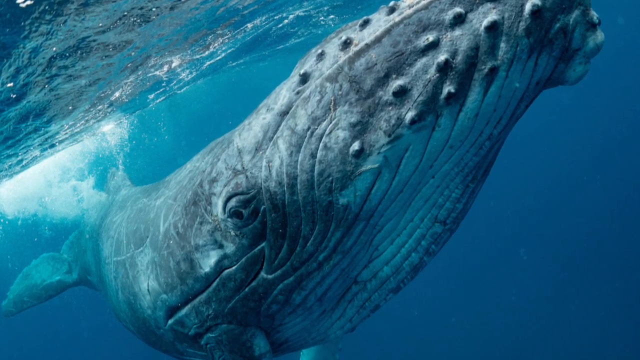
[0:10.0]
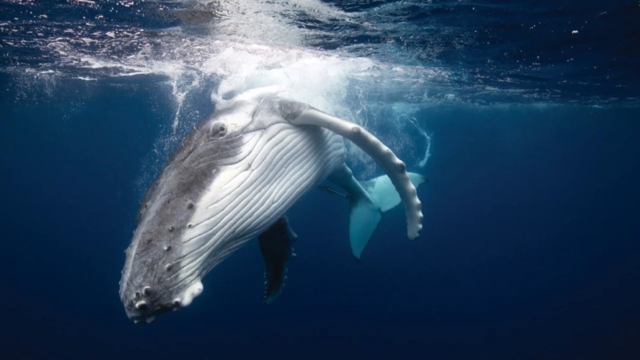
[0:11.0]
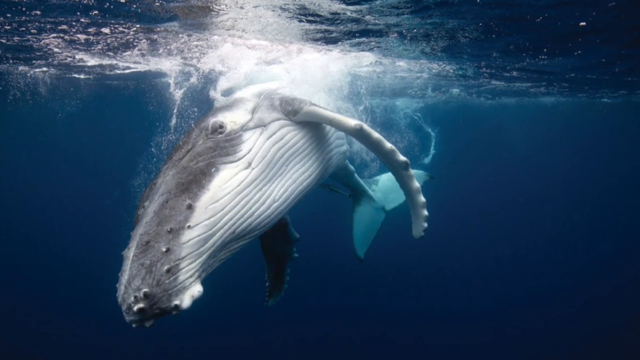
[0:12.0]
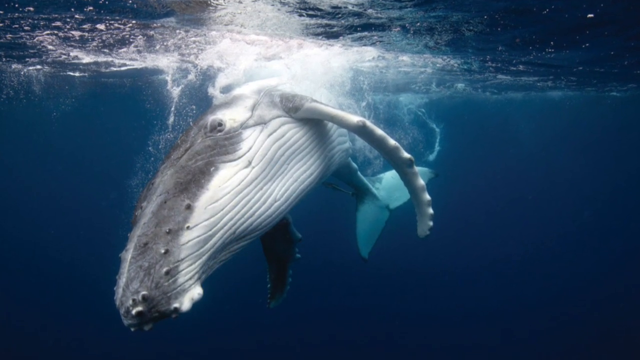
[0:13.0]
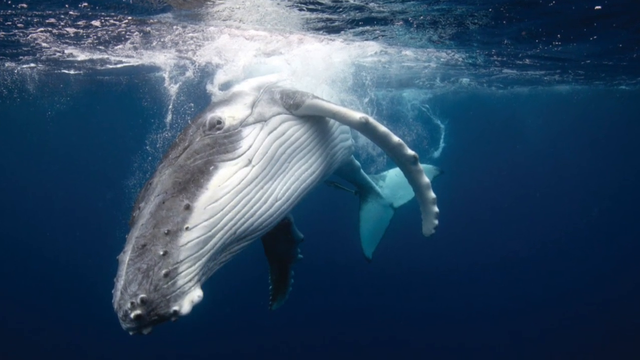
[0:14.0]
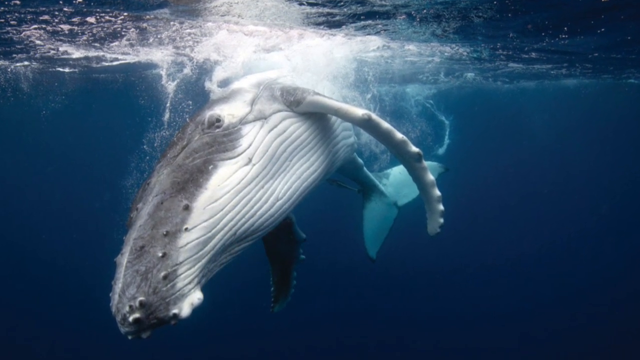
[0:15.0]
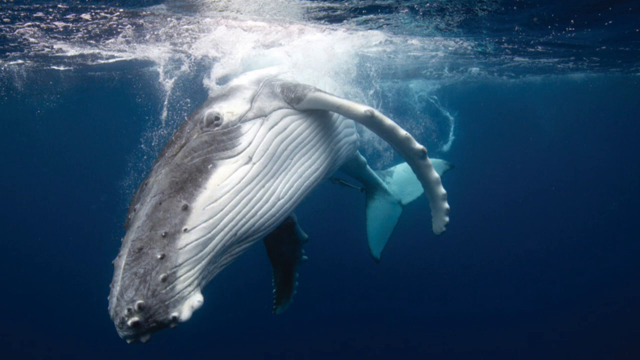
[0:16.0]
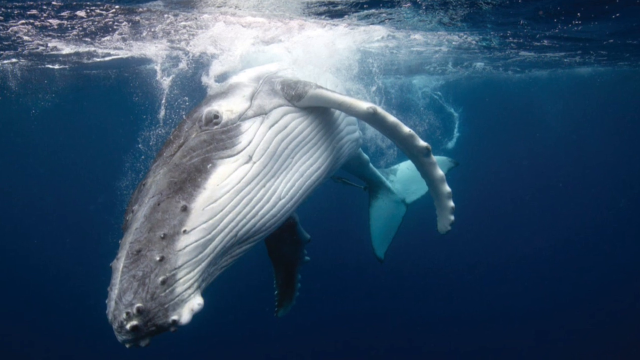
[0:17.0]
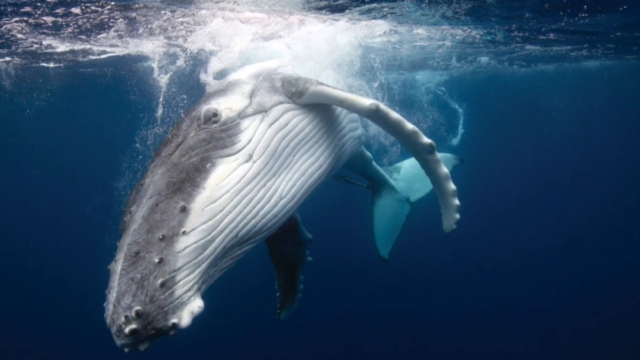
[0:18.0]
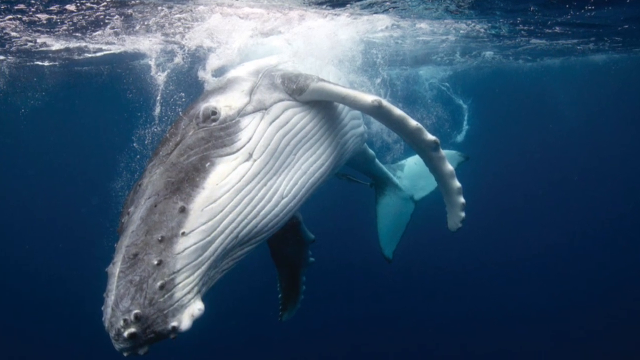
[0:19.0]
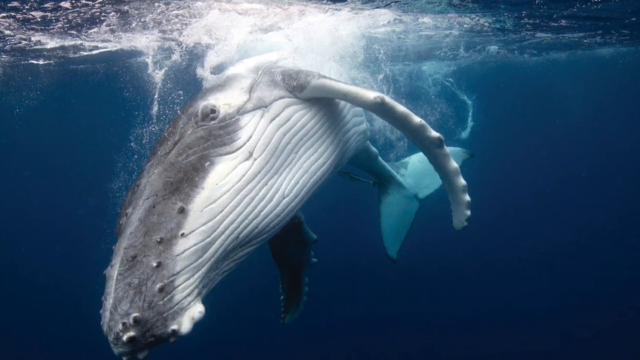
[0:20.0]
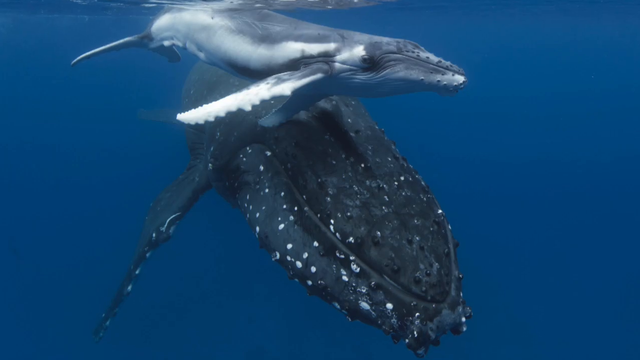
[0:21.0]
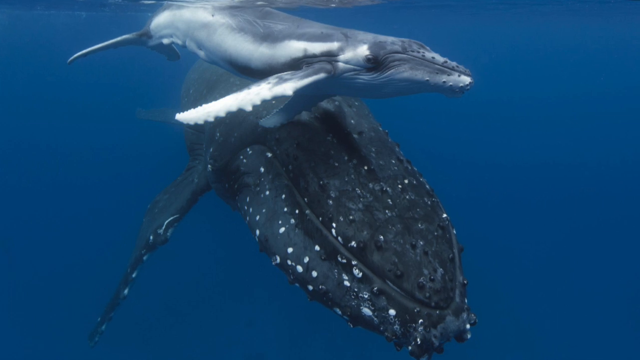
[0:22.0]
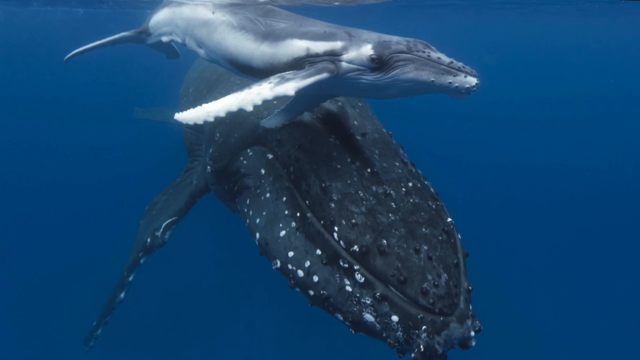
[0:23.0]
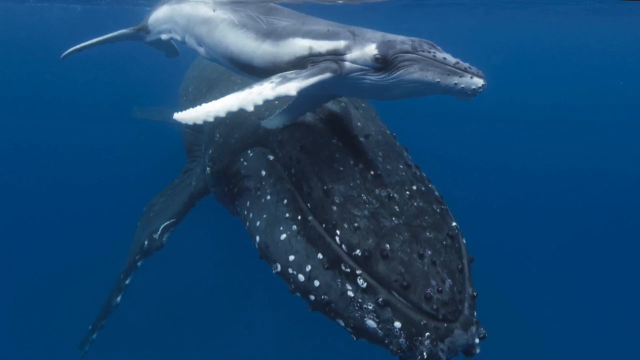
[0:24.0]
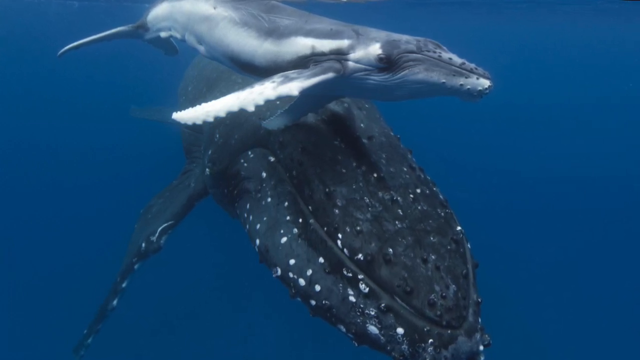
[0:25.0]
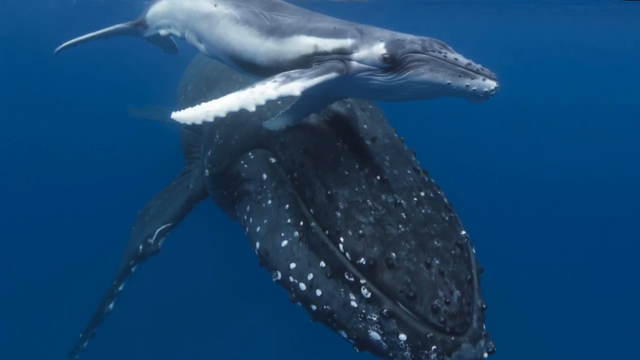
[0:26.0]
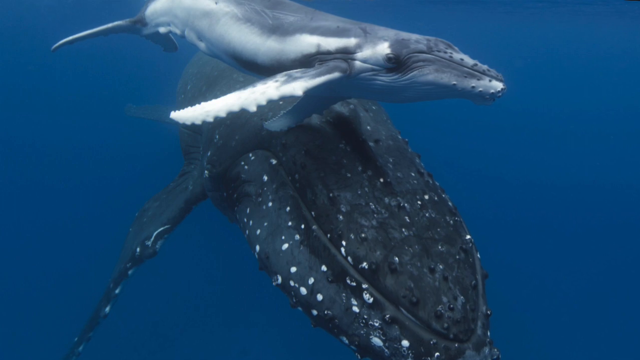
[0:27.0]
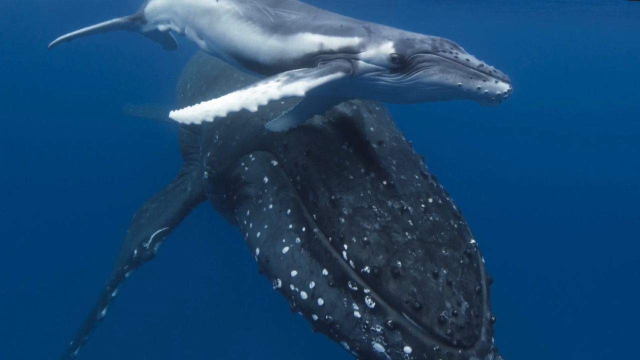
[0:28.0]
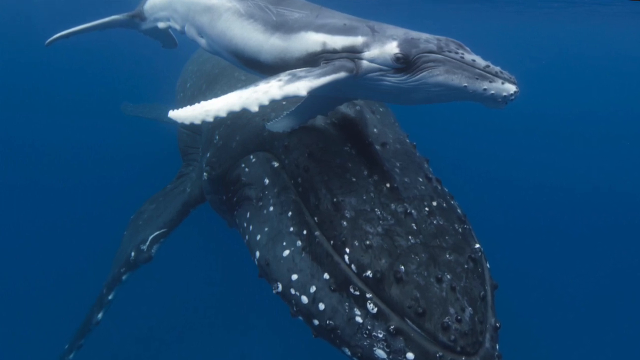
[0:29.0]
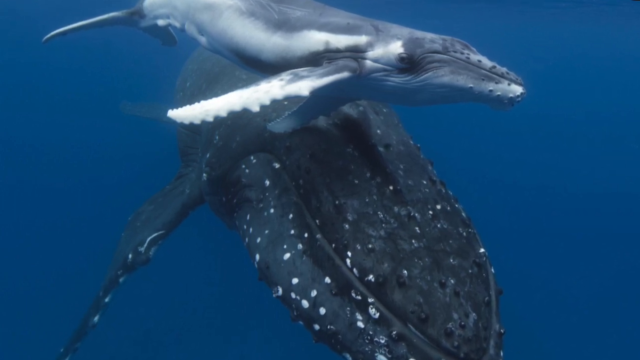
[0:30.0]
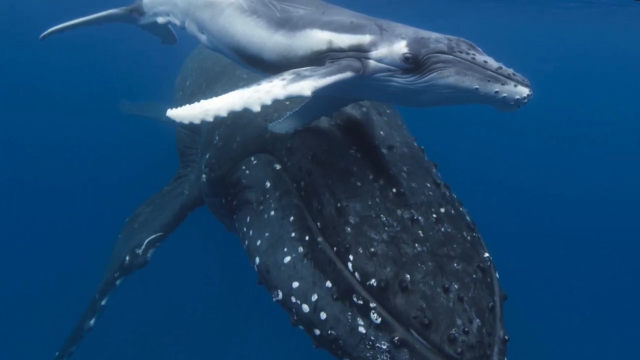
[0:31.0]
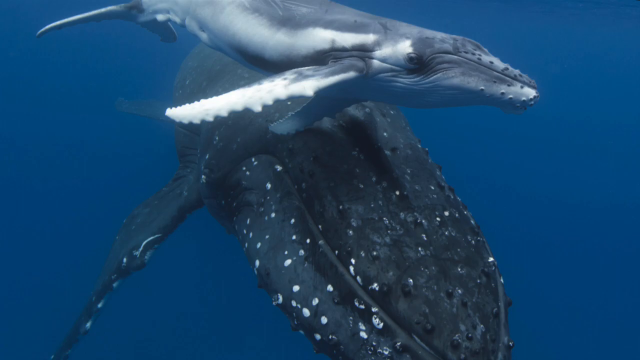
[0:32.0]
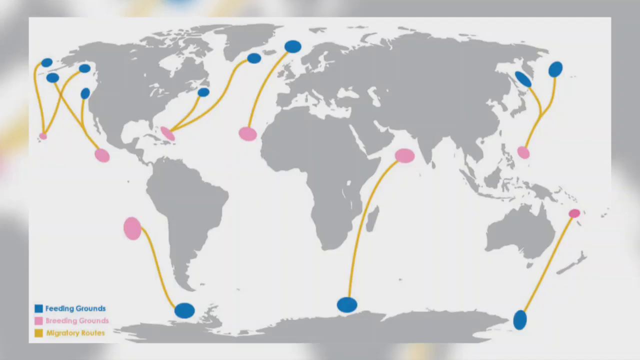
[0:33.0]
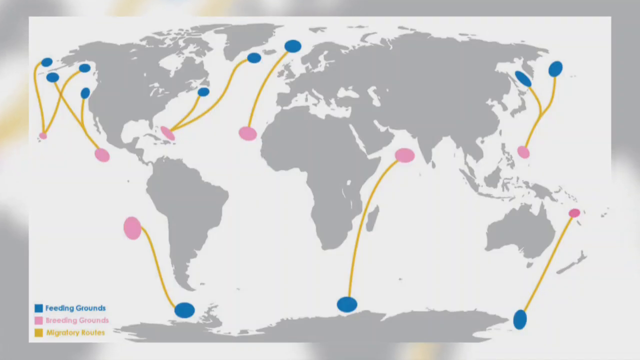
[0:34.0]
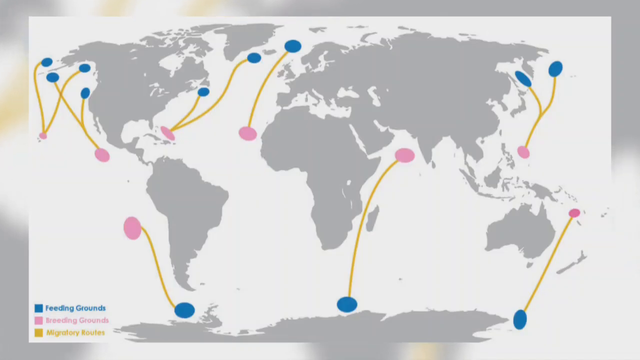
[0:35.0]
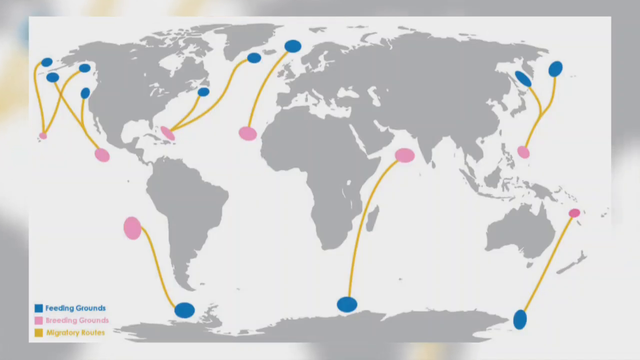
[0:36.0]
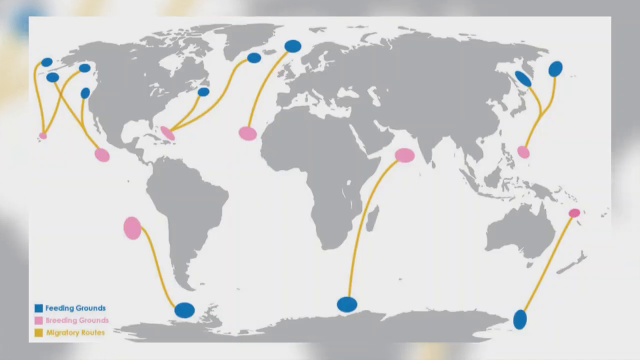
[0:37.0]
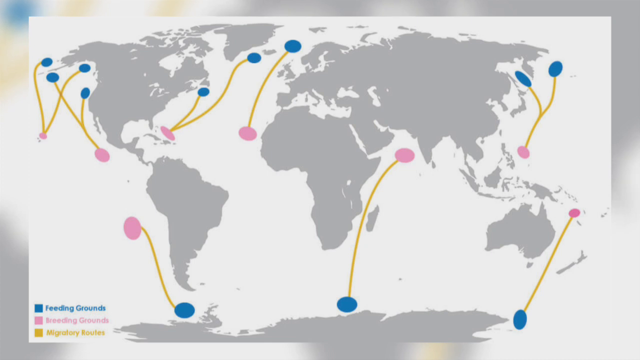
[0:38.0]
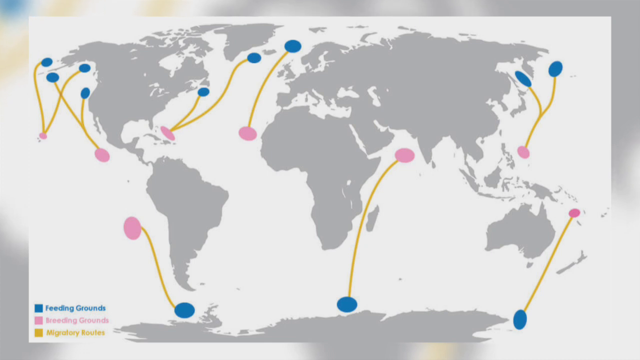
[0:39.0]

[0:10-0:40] The photograph of a whale underwater is on screen. The whale is white and light gray against a background of light blue colors, and its tail is barely visible. The surface of the water is at the top of the photograph, and where the whale enters the water there is white foam. The photograph approaches the camera, rotating slightly counterclockwise. Next comes an image of two large fish underwater on a dark blue background; this photograph also approaches the camera, this time rotating slightly clockwise. Then a geographical map appears, with the emerged lands in gray and the seas and oceans in white. On the map there are curved yellow segments and small pink and blue spheres. The quality of the photos is quite good.